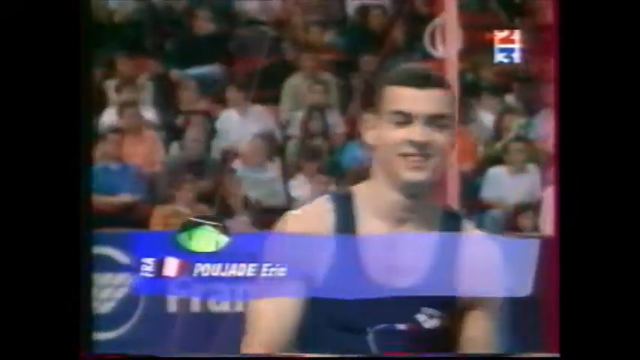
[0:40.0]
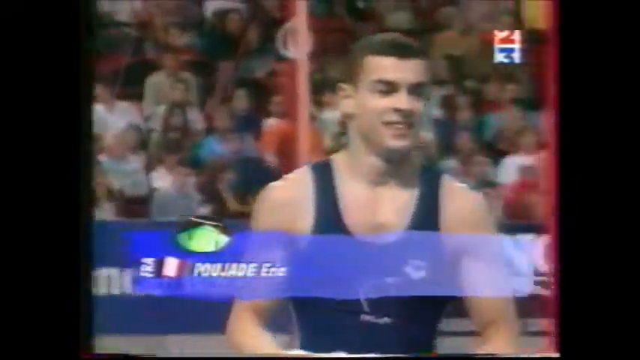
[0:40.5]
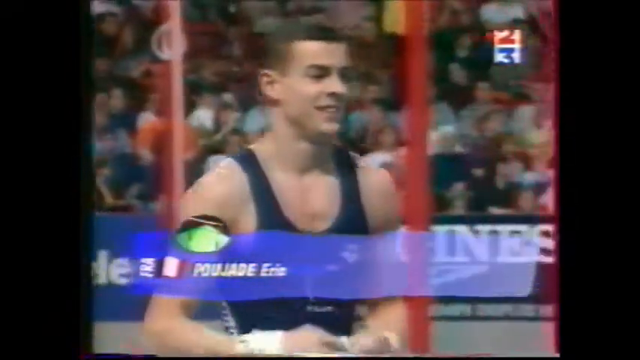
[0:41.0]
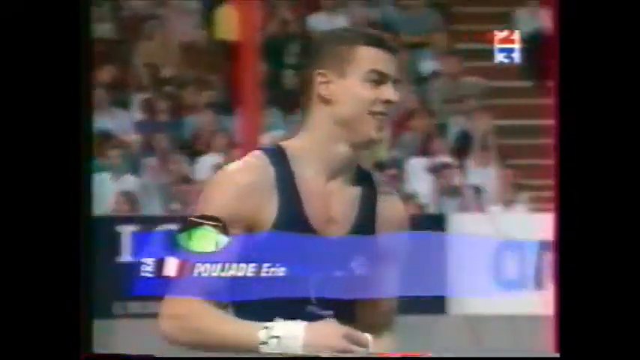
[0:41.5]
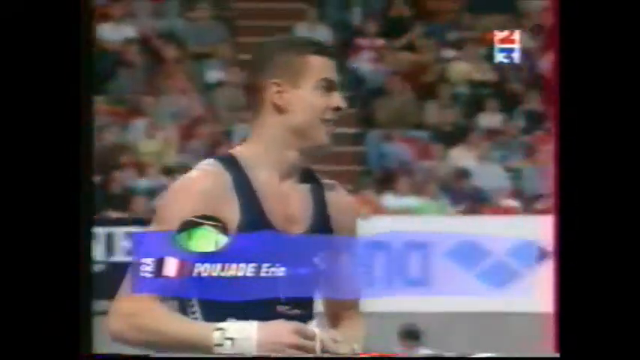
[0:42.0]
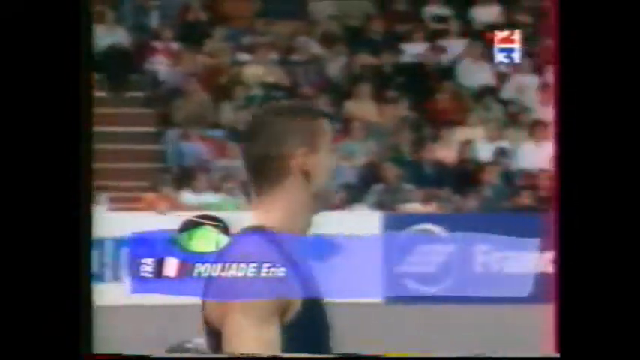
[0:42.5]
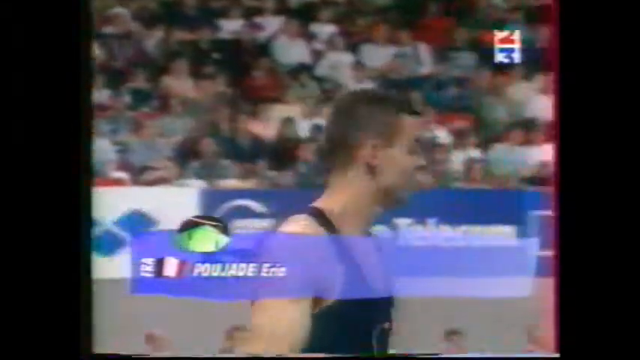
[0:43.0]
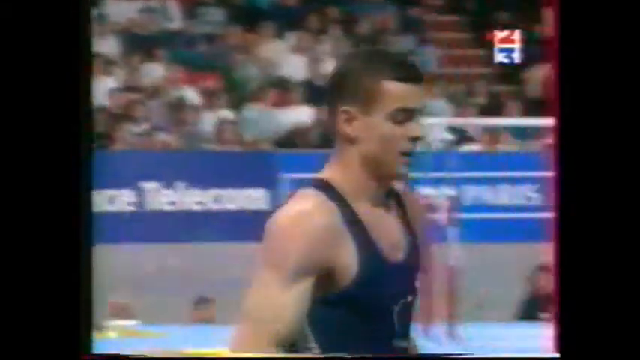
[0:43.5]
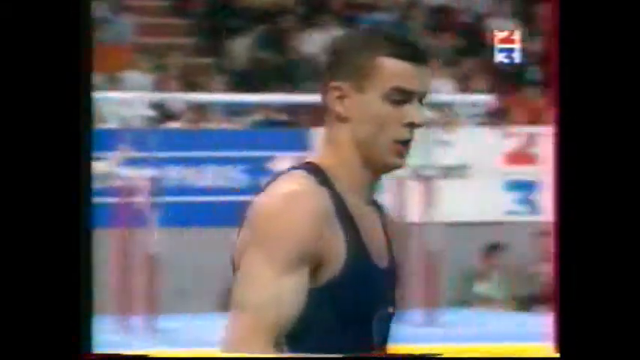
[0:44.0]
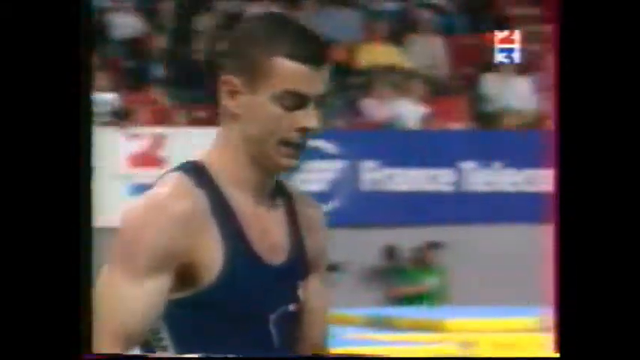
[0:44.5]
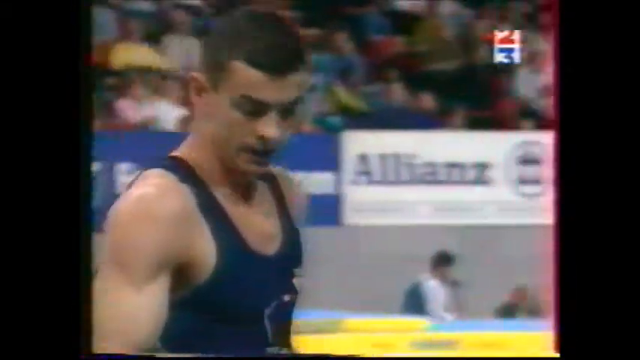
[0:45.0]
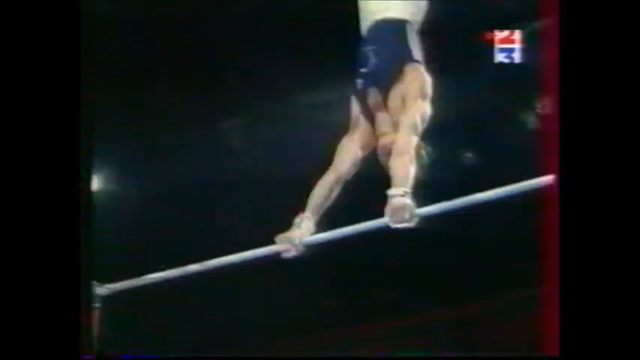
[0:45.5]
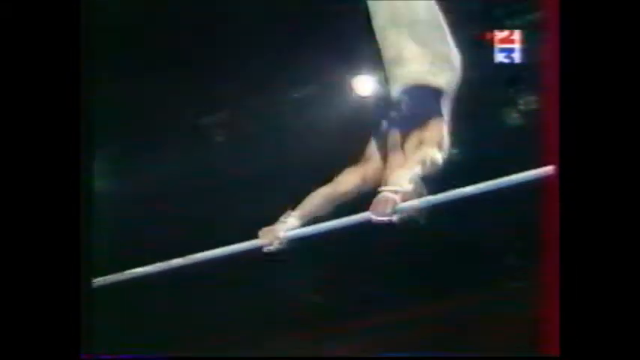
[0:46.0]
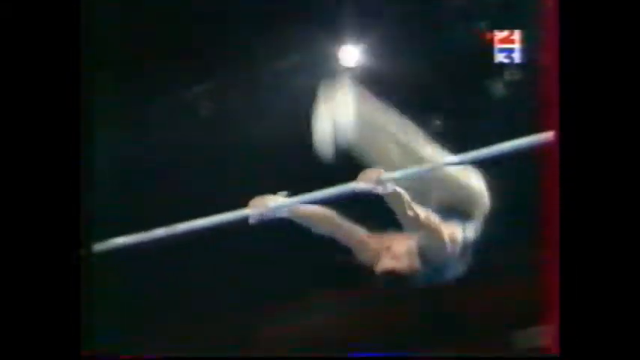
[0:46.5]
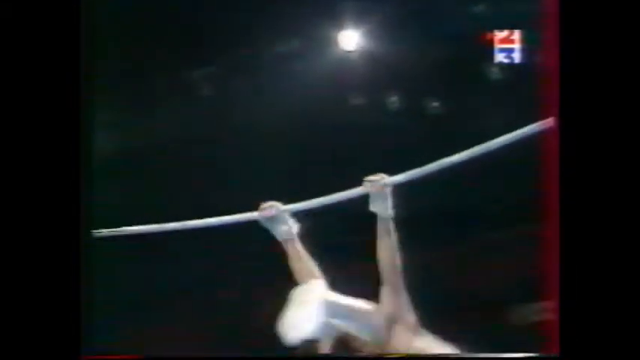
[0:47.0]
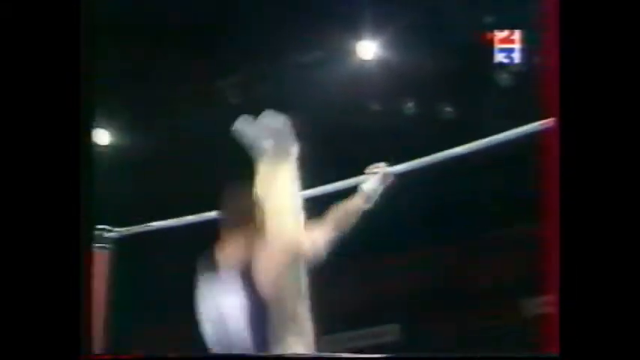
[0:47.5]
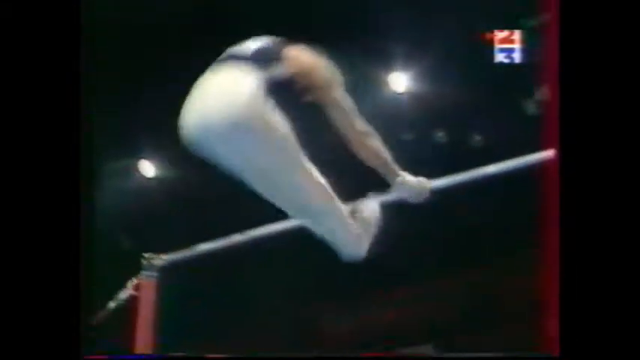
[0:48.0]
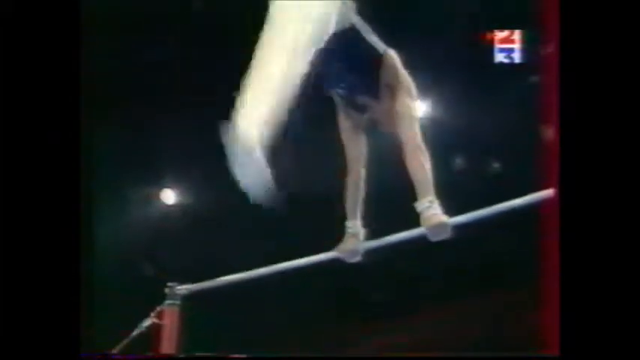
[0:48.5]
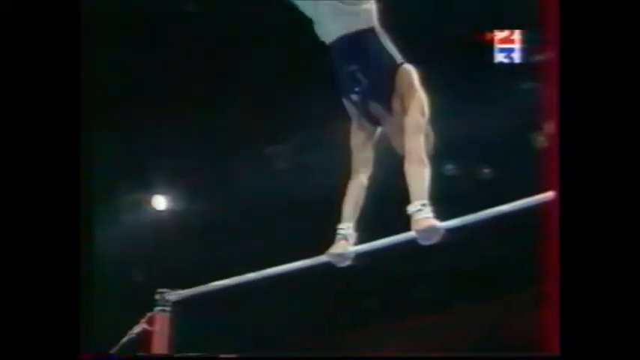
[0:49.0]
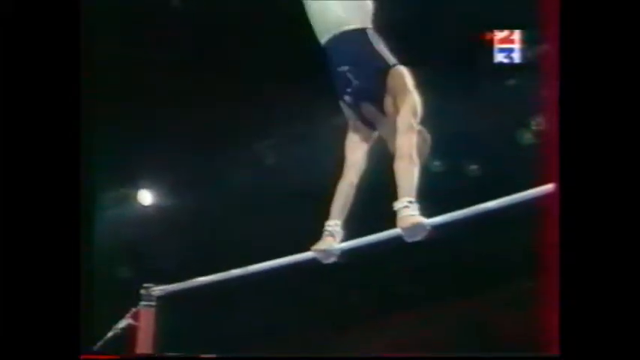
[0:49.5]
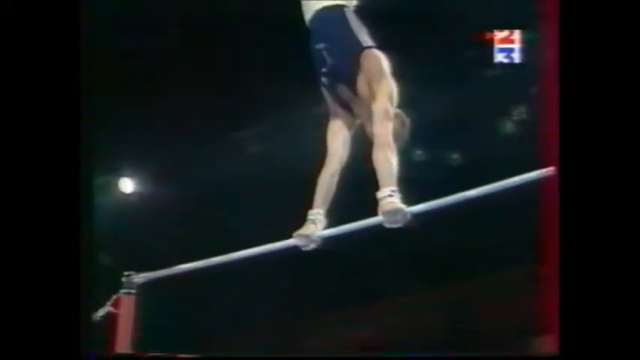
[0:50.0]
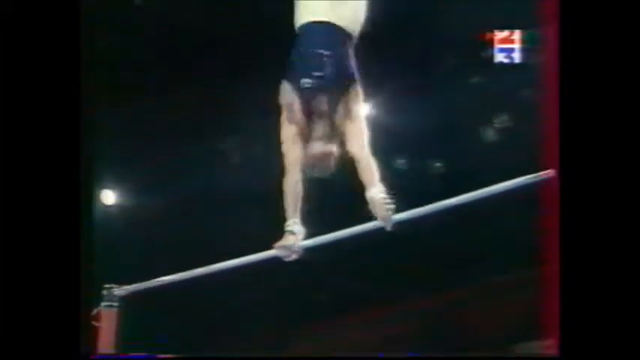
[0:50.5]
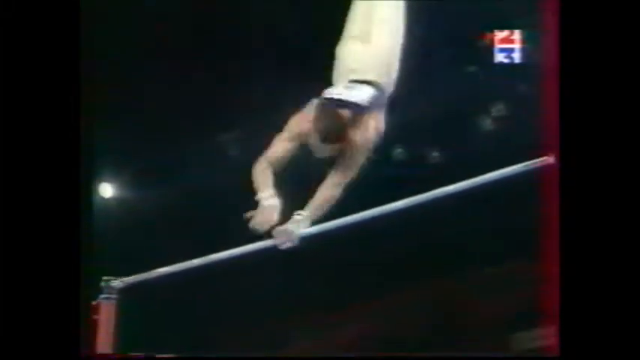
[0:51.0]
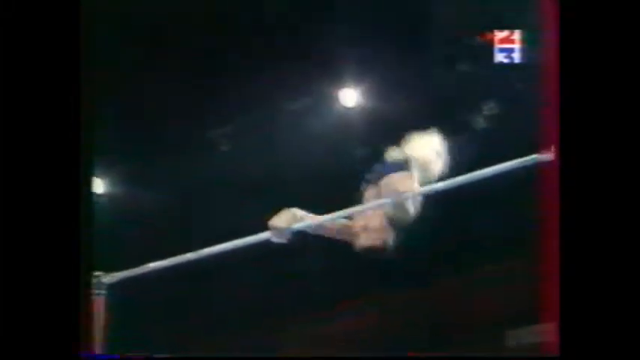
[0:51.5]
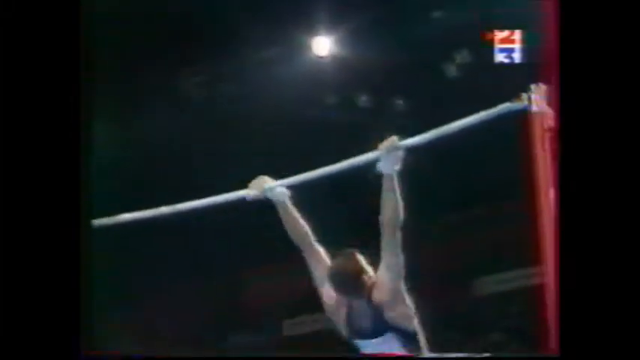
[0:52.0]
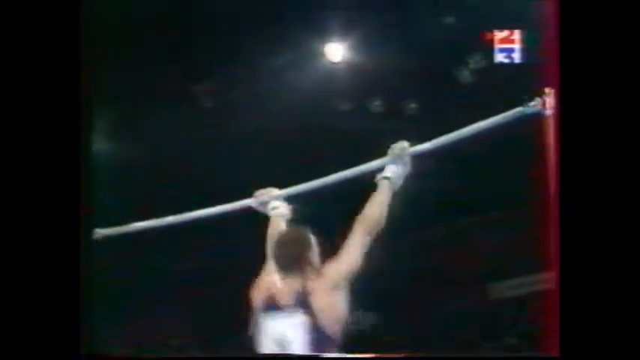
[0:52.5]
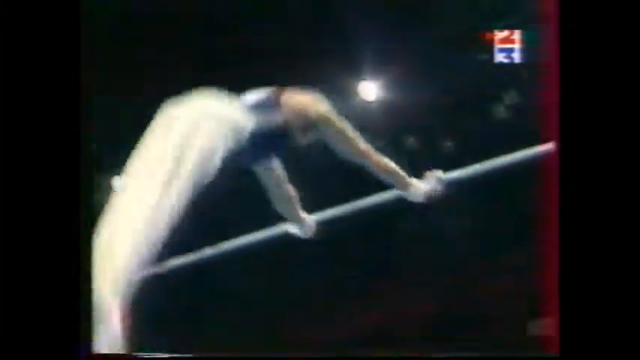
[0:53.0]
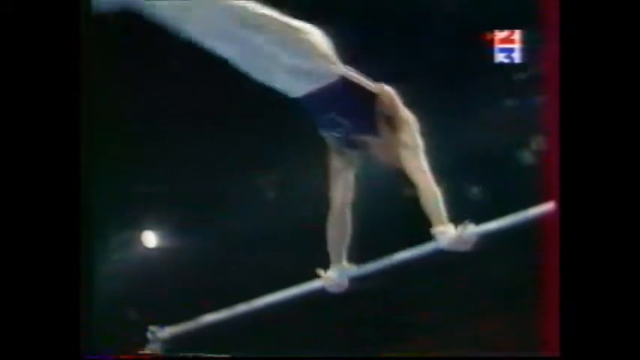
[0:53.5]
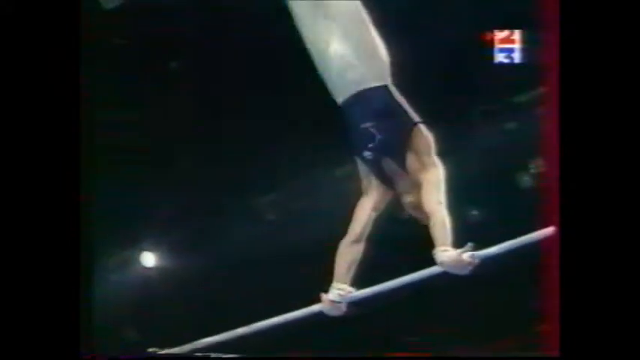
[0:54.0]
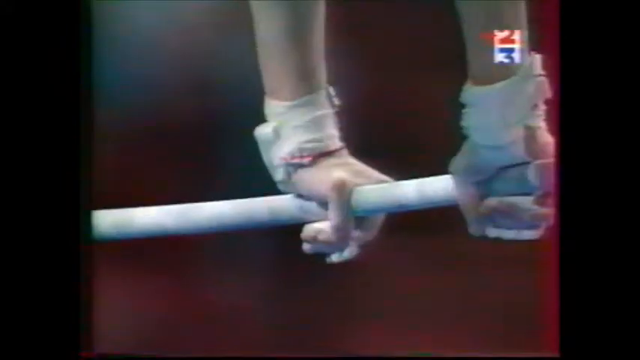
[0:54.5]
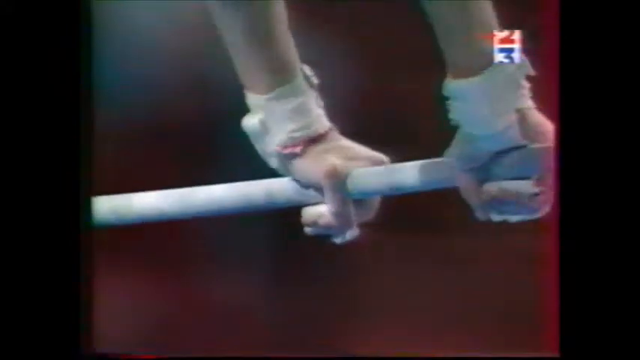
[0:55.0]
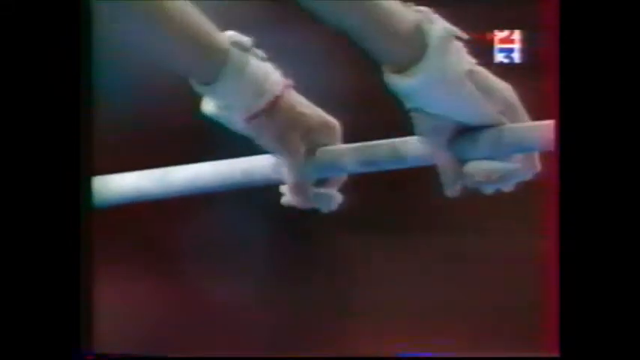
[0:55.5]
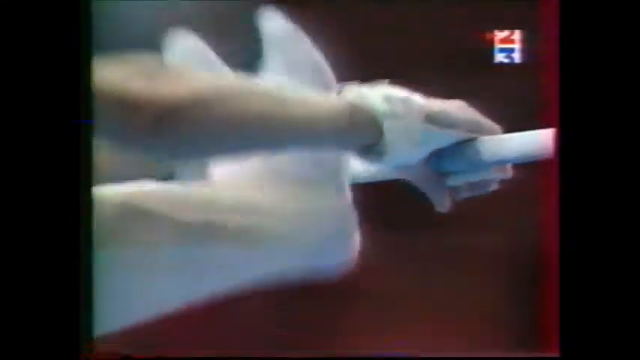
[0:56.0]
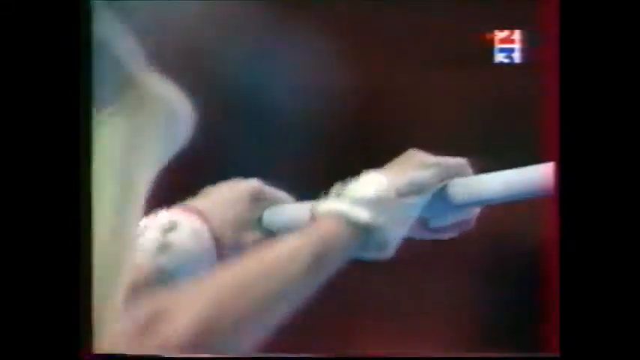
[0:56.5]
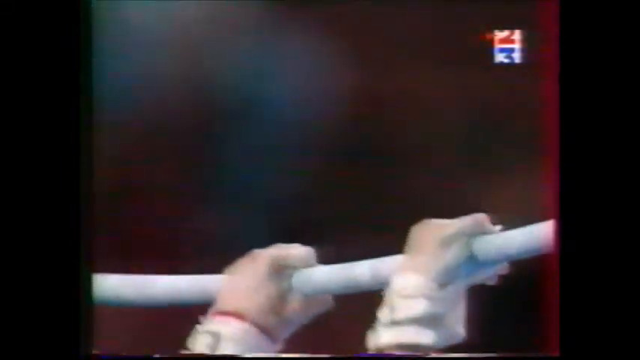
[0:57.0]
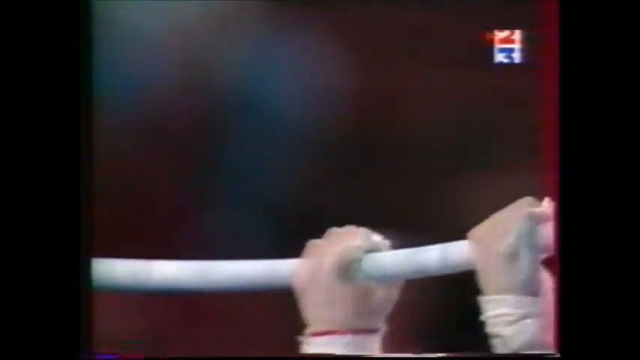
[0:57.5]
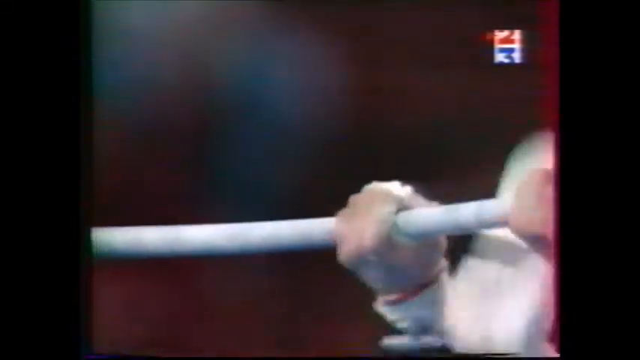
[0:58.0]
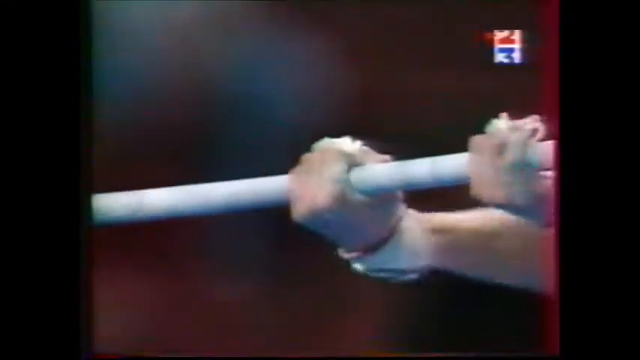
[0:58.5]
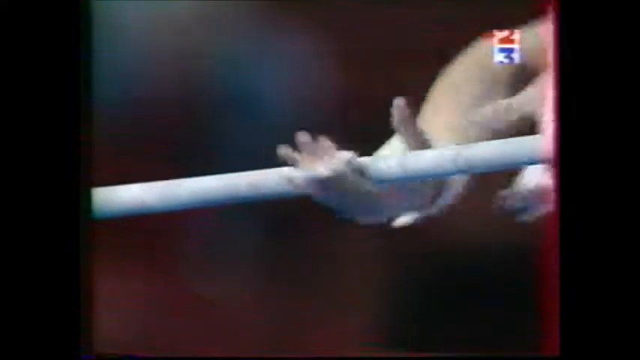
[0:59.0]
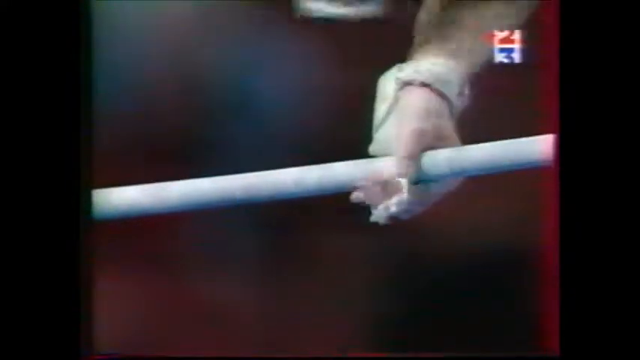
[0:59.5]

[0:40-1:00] At a gymnastics competition, a French male athlete has just finished his routine on the bar. He wears a blue top and has fair skin and short black hair. Sponsorship behind him reads "Arena", and fans are visible behind him as well. His name appears at the bottom of the screen in yellow text on a blue background, with a French flag next to it. He has a smile on his face as he drops off the mat. A short replay of his performance follows: he is sort of upside down, spins up, goes into a handstand, pivots at the top, then starts swinging the same way but with his head facing the opposite direction. A close-up shows his hands on the bar as his legs go in between his hands, and he rotates in the air as he grabs the bar so he keeps swinging the same way while facing the opposite direction.